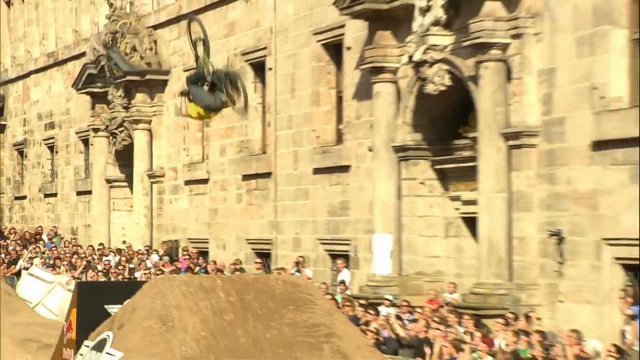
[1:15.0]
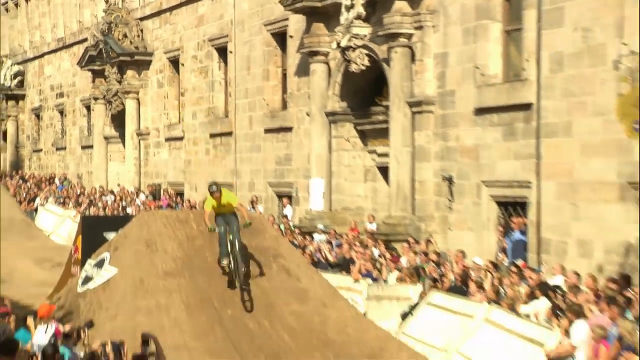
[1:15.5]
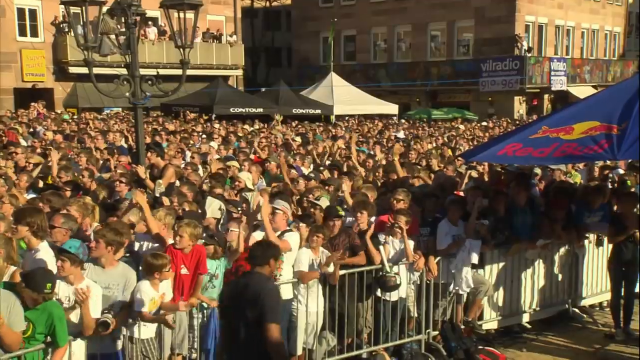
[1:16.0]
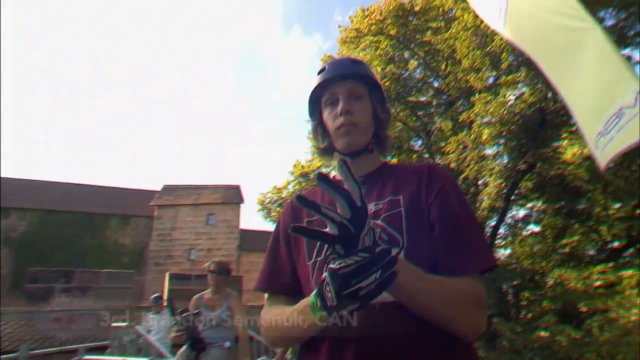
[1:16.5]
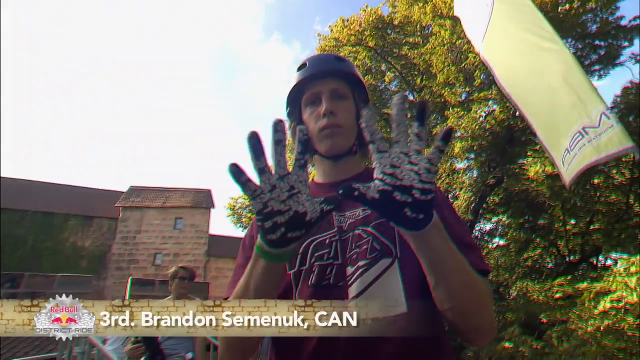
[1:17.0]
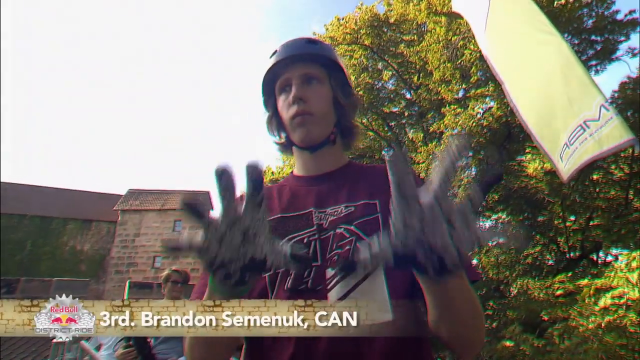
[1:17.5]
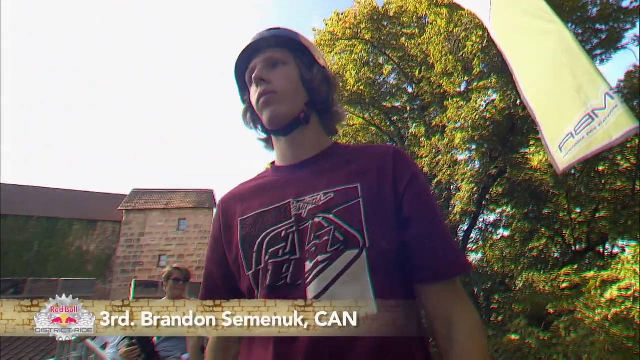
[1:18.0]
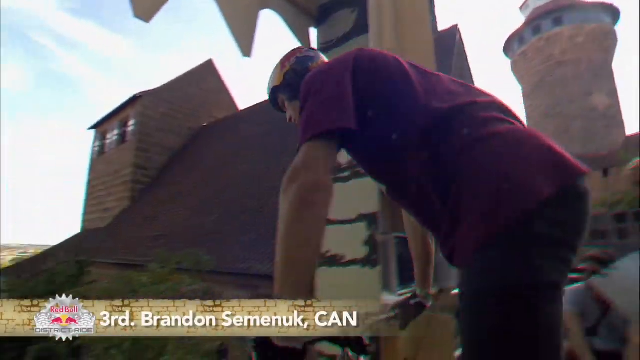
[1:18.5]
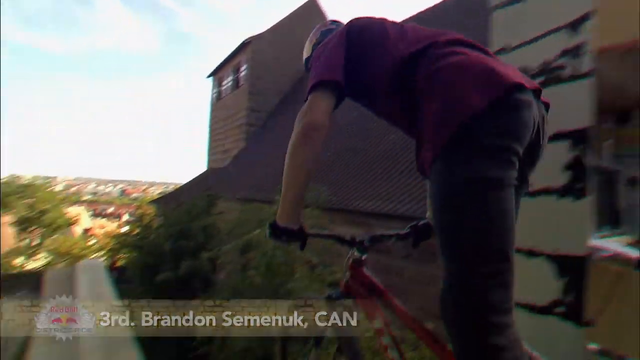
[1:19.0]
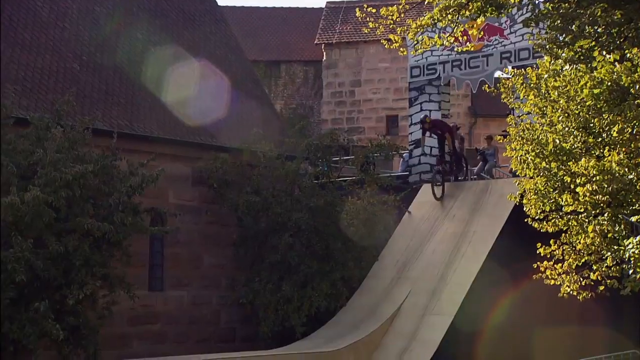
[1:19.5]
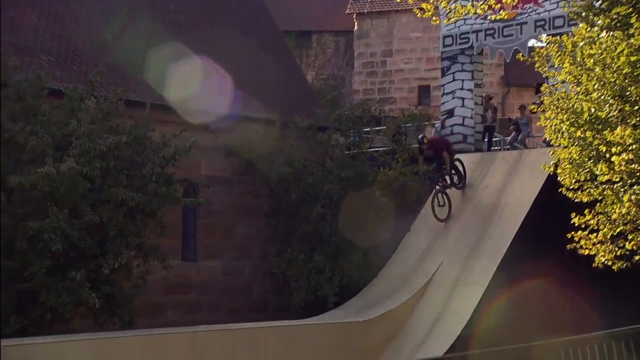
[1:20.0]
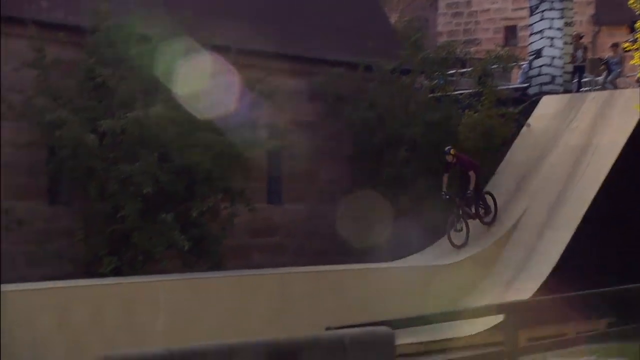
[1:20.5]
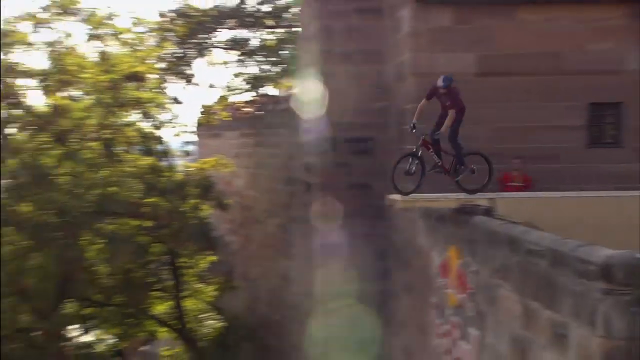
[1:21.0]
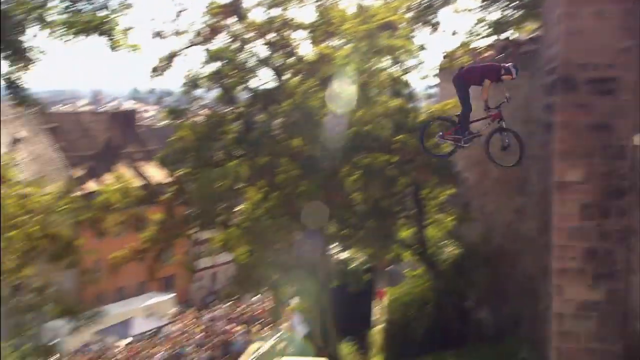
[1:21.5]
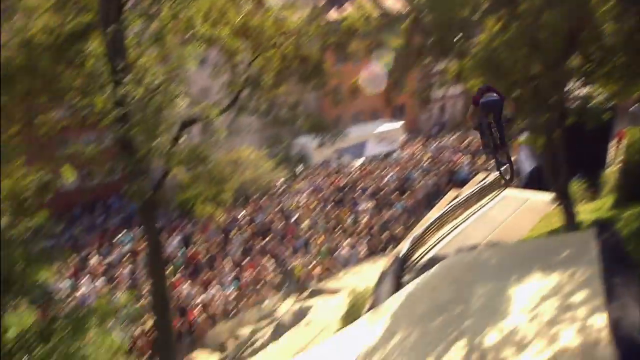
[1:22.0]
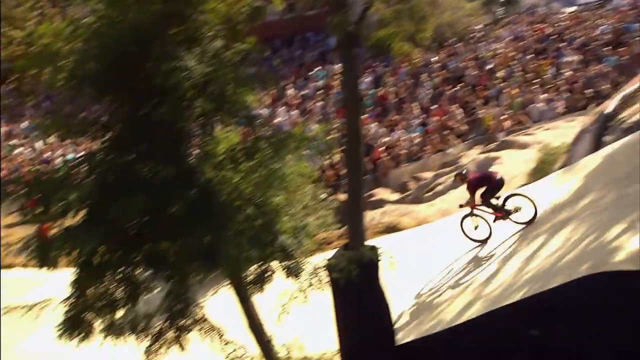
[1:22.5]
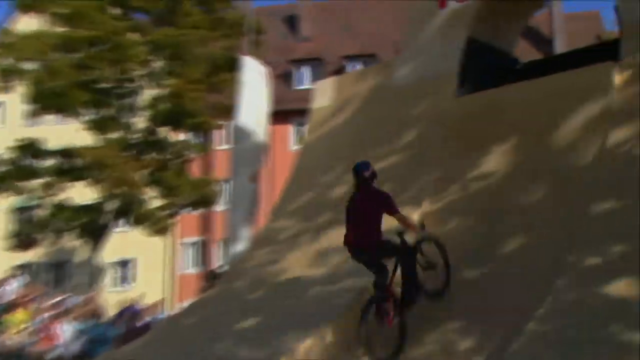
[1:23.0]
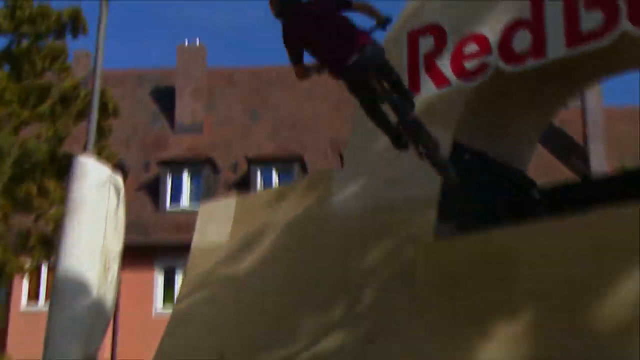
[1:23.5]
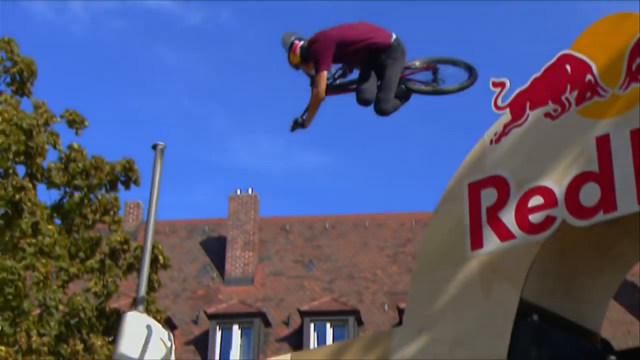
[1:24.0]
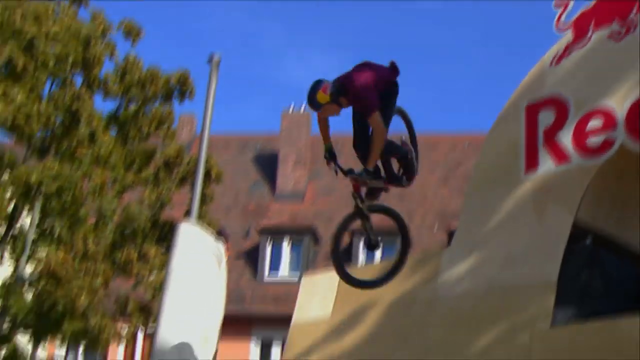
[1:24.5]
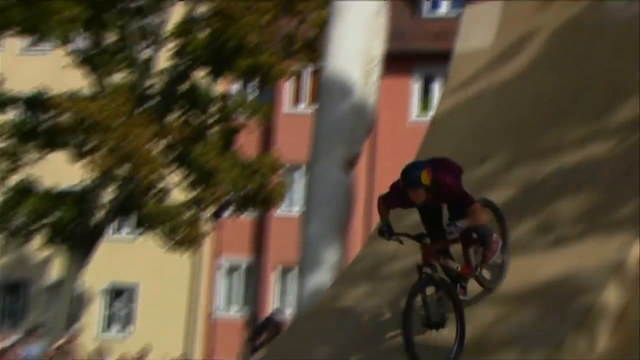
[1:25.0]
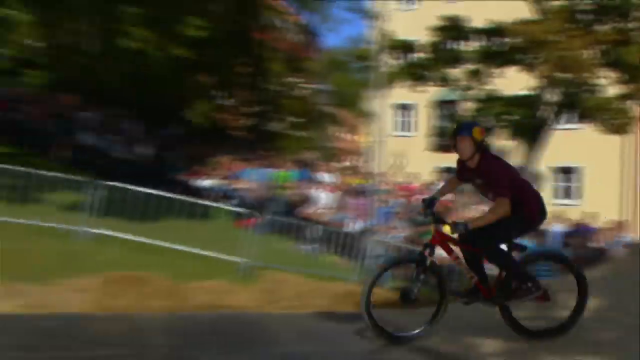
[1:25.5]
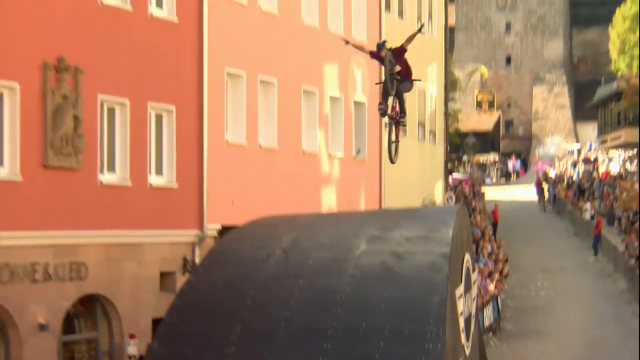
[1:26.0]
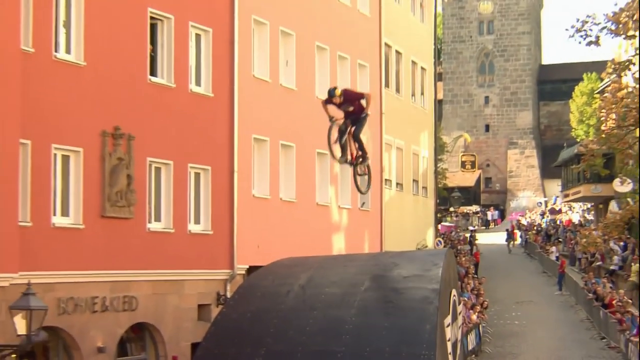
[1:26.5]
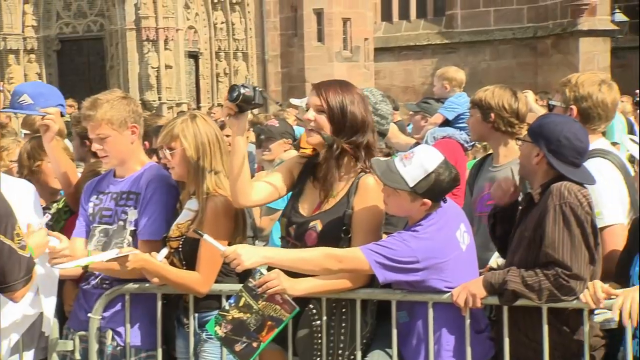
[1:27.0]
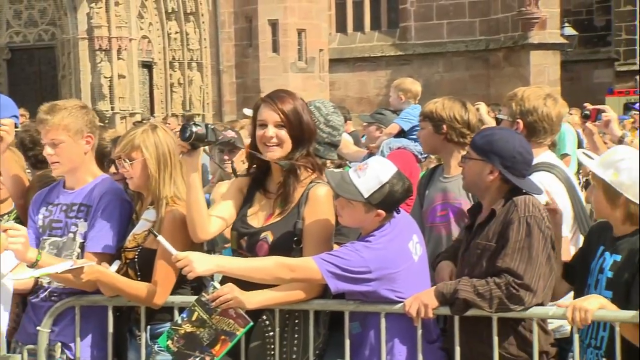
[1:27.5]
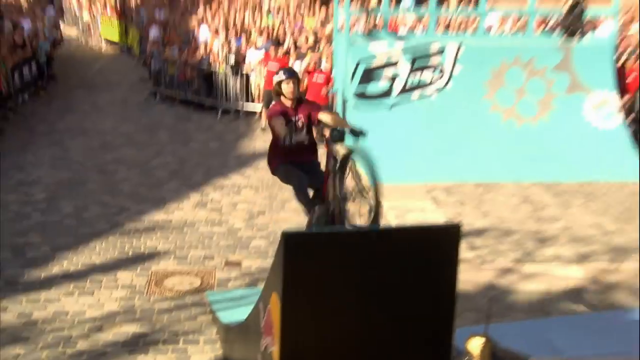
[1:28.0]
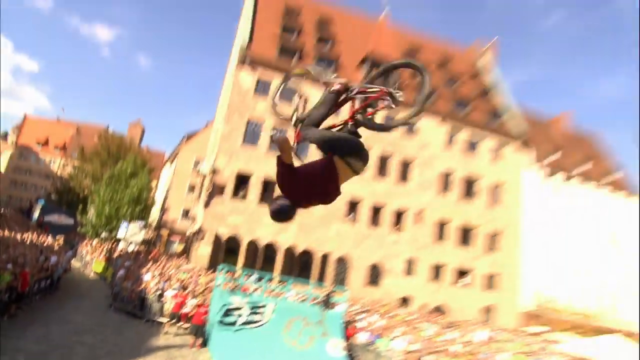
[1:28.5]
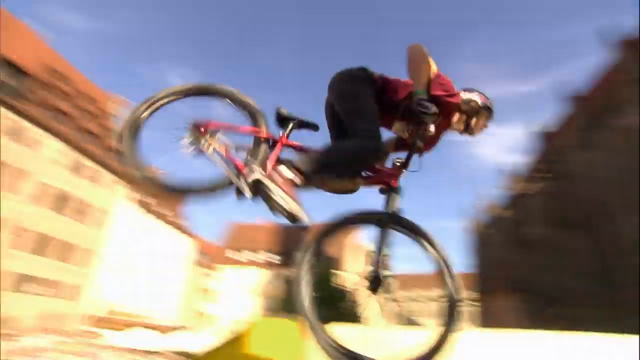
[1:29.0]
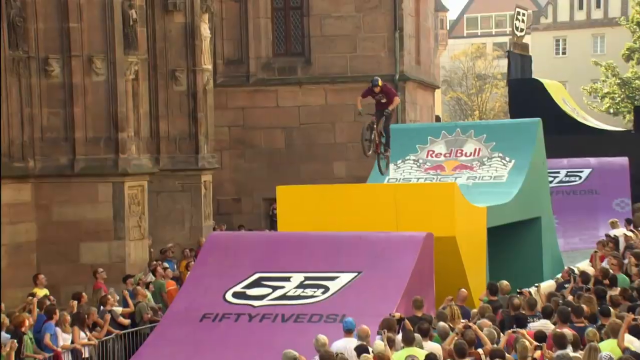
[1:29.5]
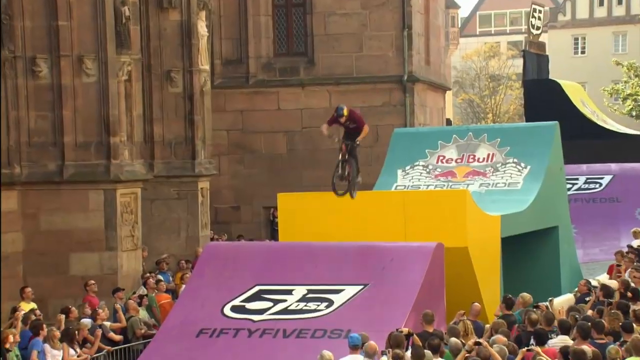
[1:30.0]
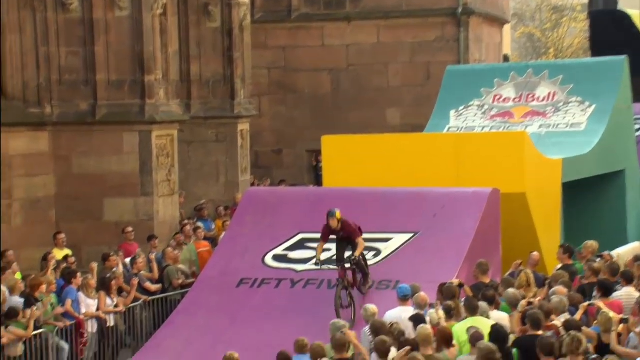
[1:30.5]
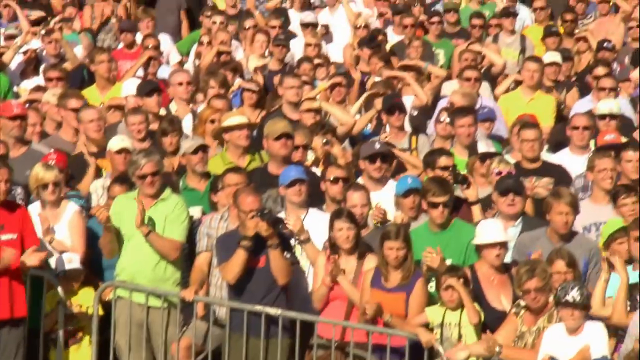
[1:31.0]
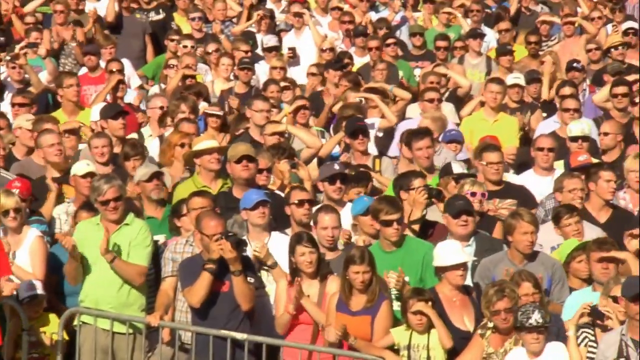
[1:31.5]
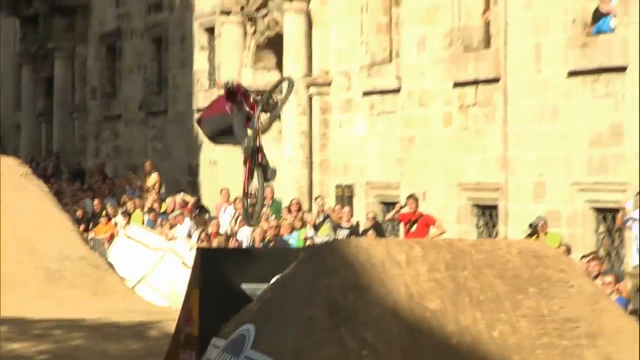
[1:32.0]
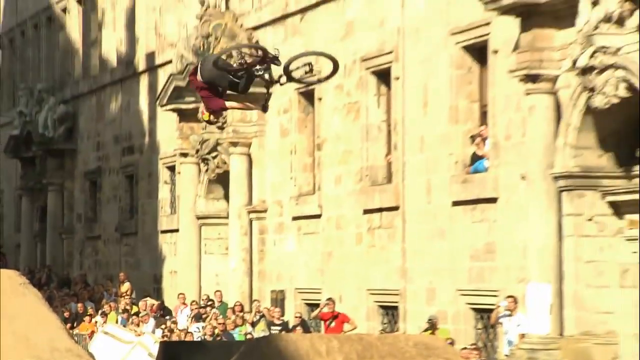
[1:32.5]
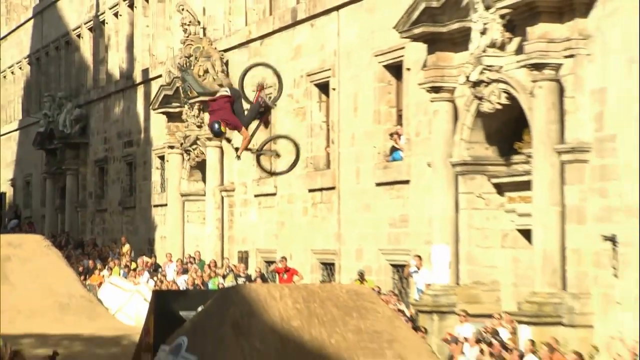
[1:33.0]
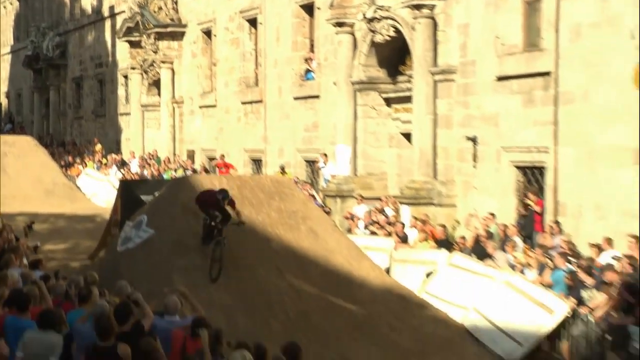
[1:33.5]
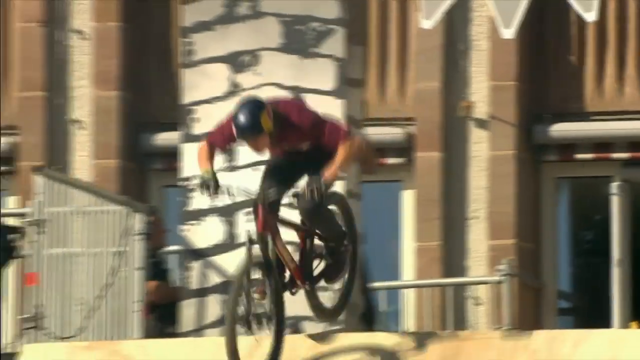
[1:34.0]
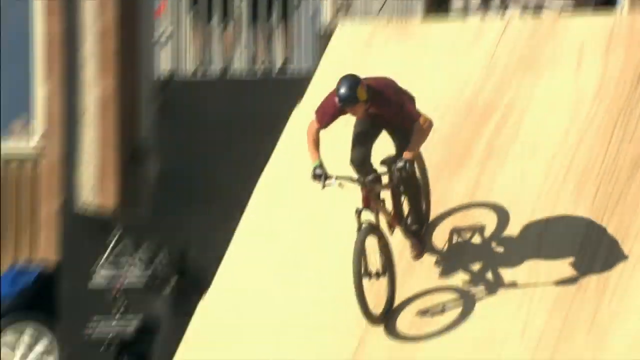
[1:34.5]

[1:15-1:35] Bicyclists perform extreme stunts, flipping their bikes in midair, going up and down ramps, turning and accelerating up into the sky, and spinning the front tire of the bike as they fly through the air. The crowd cheers and claps, mesmerized. People have their cameras out and are videoing, some with professional cameras and others with cell phones. A person who has come in third place kind of smiles at the camera and waves his hands as he is recorded. It is a sunny day, many people wear sunglasses in the strong sun, and in some shots sun rays come through and light up the screen.